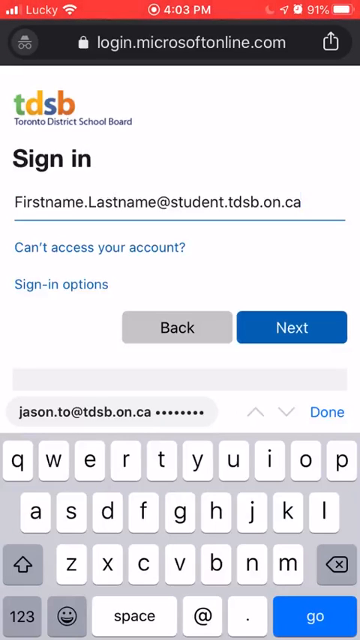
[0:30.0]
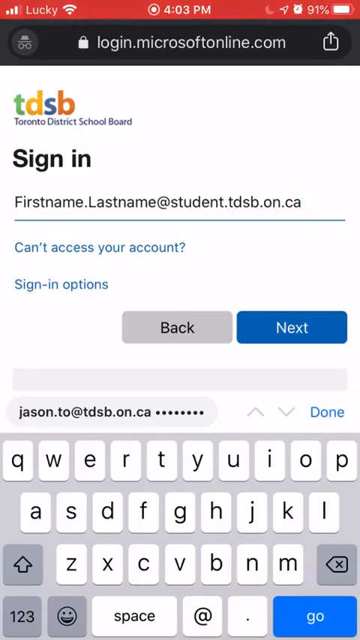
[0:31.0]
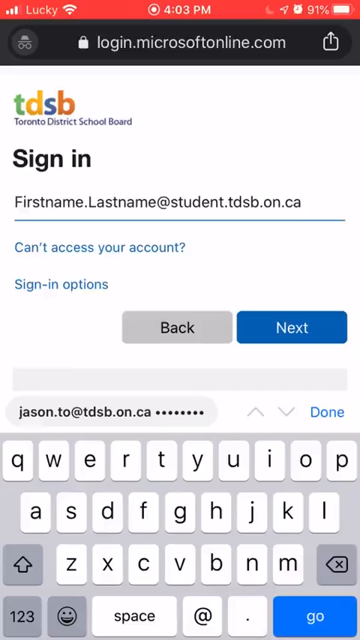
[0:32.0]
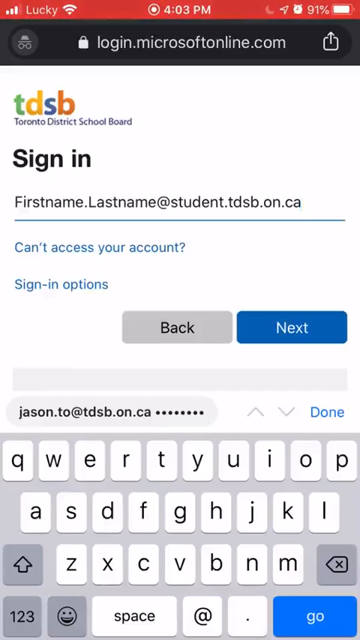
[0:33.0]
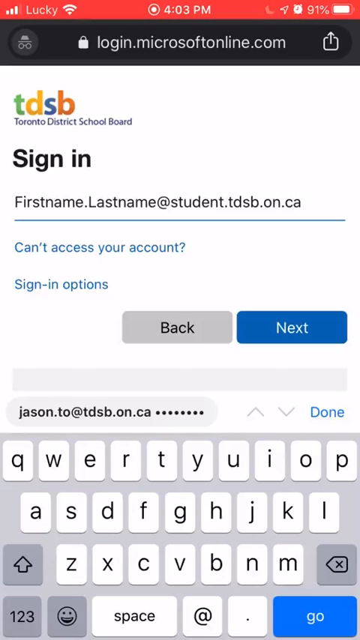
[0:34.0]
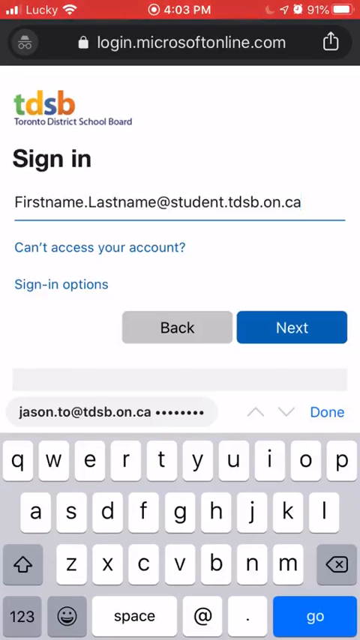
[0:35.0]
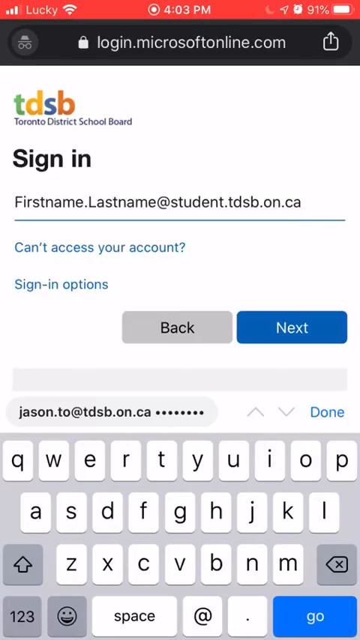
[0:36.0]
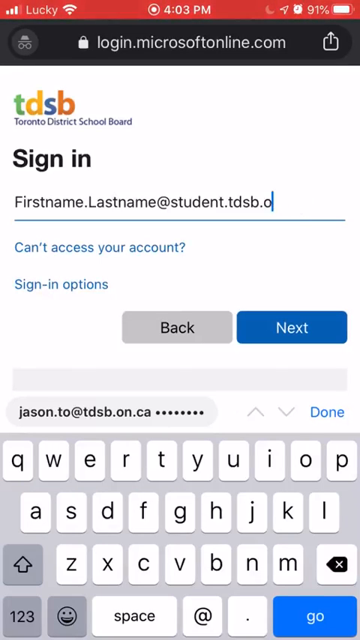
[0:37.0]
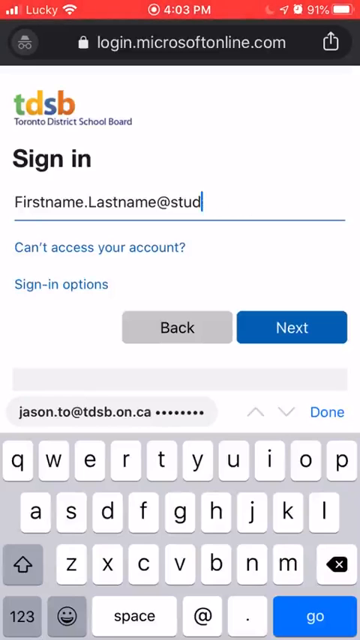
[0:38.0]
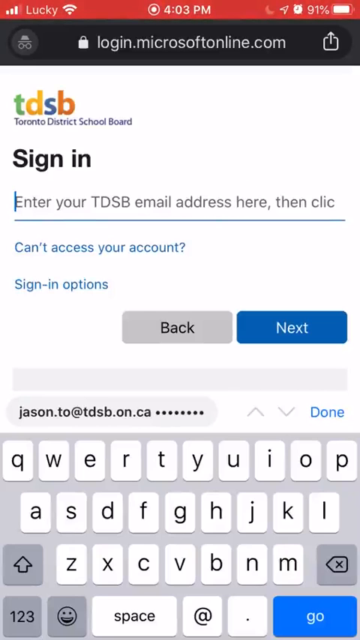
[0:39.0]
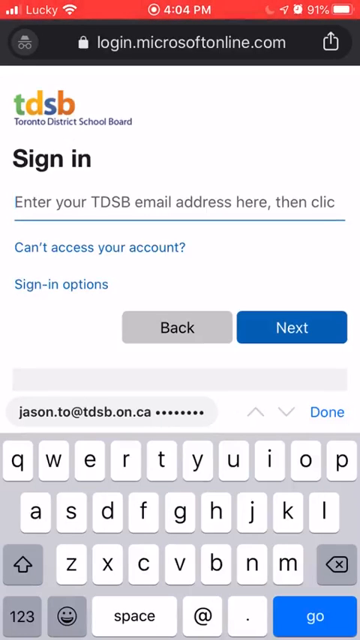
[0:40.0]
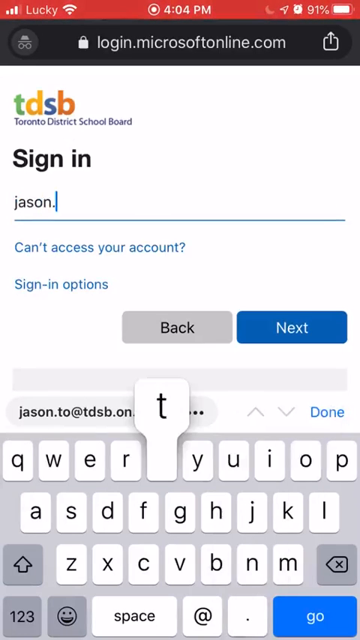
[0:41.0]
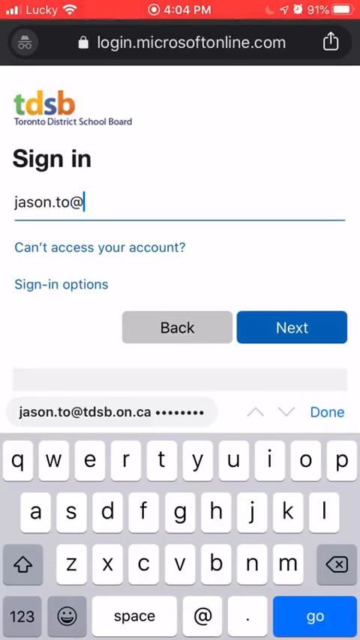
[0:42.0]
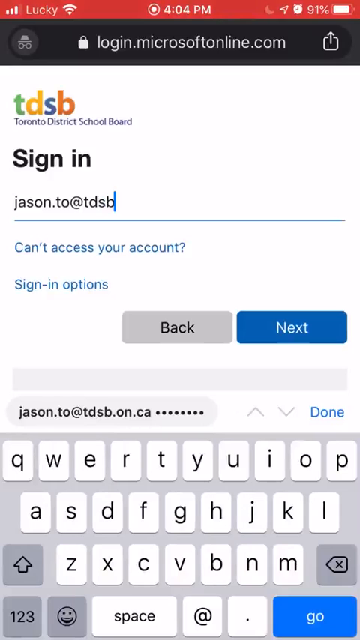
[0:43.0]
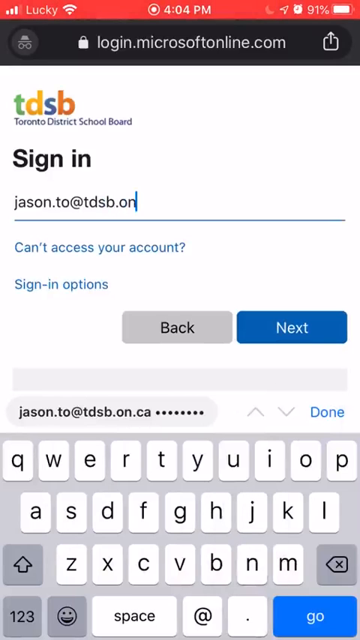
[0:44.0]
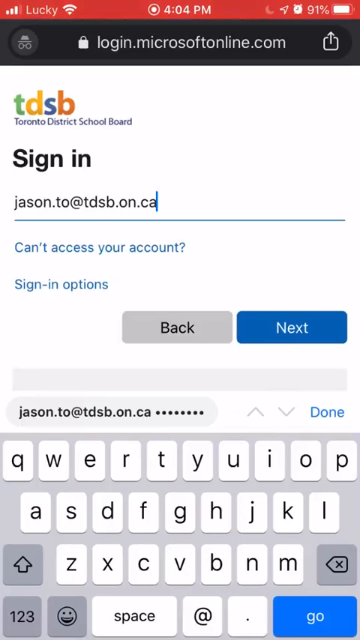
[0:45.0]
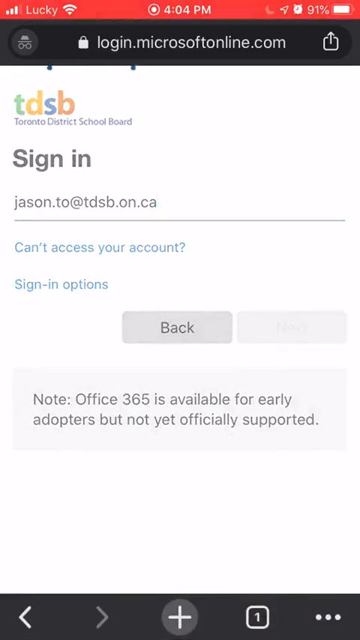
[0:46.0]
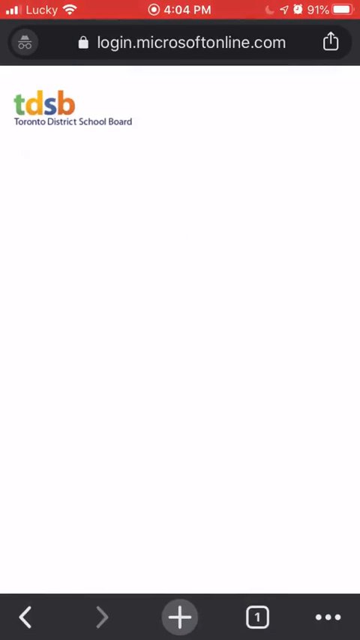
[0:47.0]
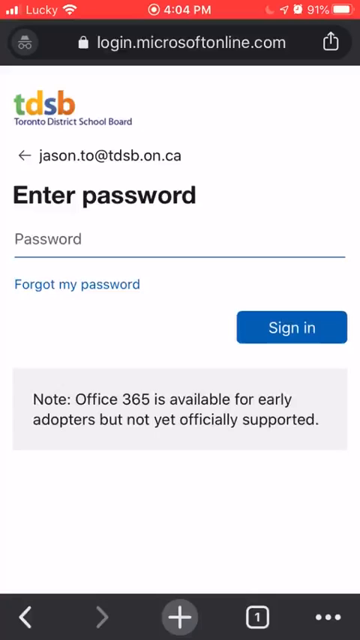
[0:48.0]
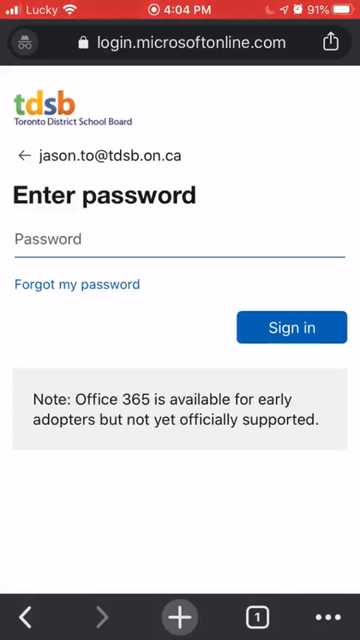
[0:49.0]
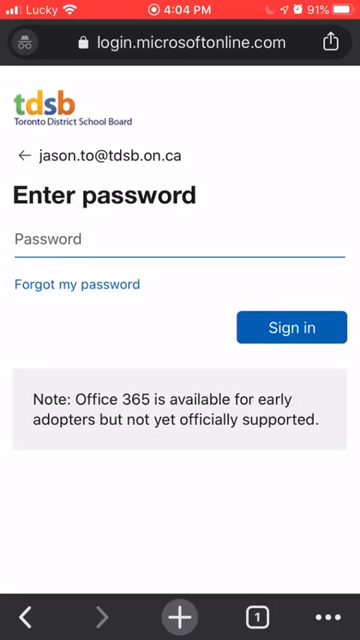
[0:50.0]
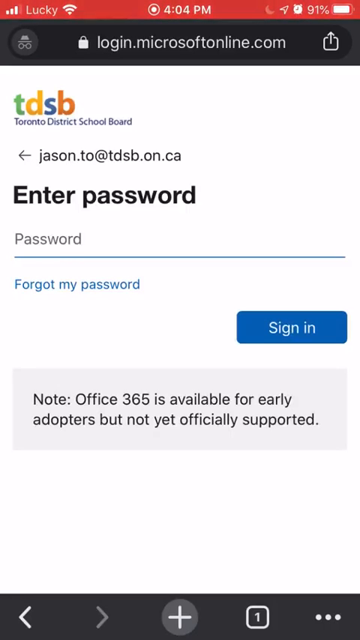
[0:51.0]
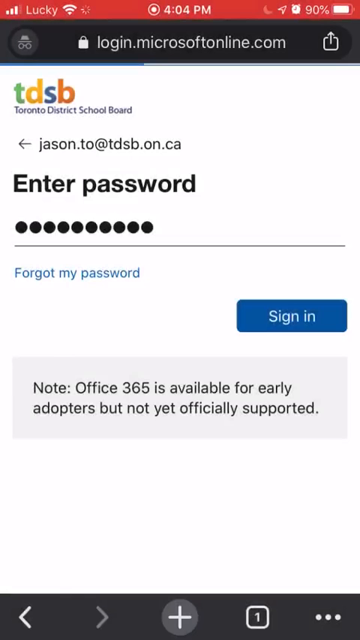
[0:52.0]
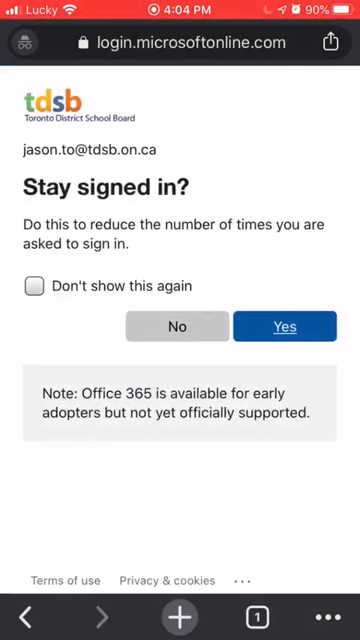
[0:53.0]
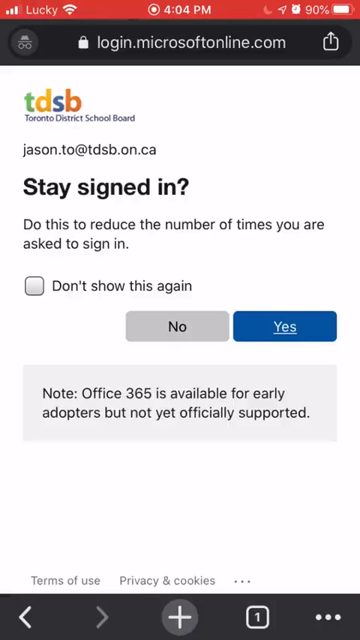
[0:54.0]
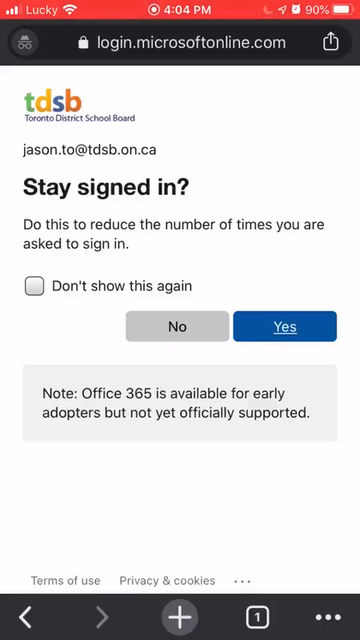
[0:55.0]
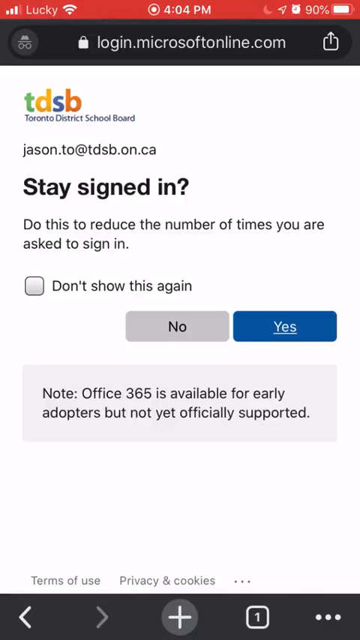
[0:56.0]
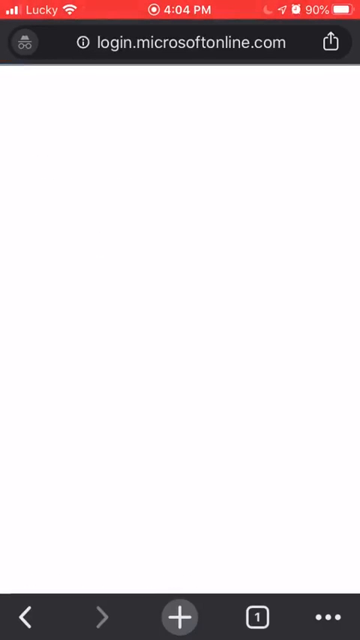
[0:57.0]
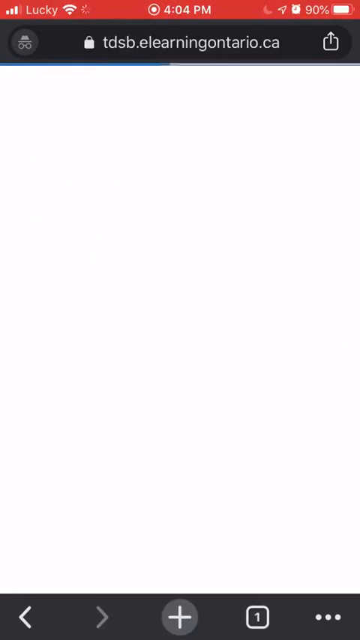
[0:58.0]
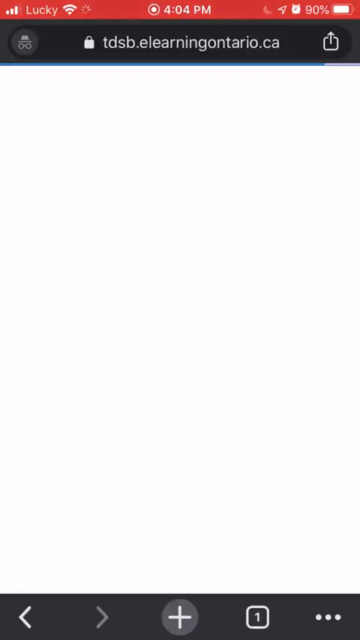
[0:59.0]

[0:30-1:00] The login continues through the TDSB Microsoft single sign-on. The user manually inputs the email address json.to.tdsb.on.ca, and the screen moves to the enter password field. A password is quickly entered, a prompt asks whether to stay signed in, and the user proceeds. The address login.microsoftonline.com is visible at the top of the mobile screen. In the status bar at the top, a red rectangle at the far right shows the battery level, with what is potentially an active alarm next to it, a triangle for location services, and a sort of moon shape for night mode. The time in hours and minutes with AM/PM format is in the centre, and toward the left are the signal, the word "lucky", and a connected Wi-Fi indicator.